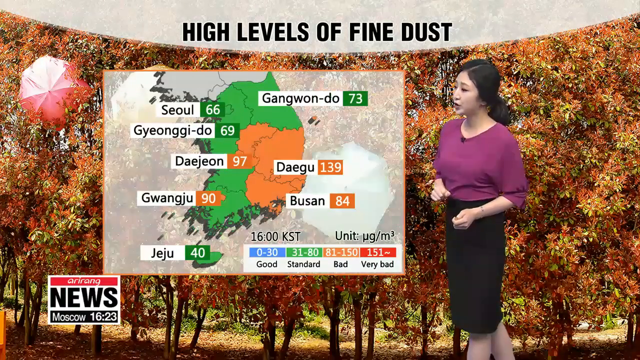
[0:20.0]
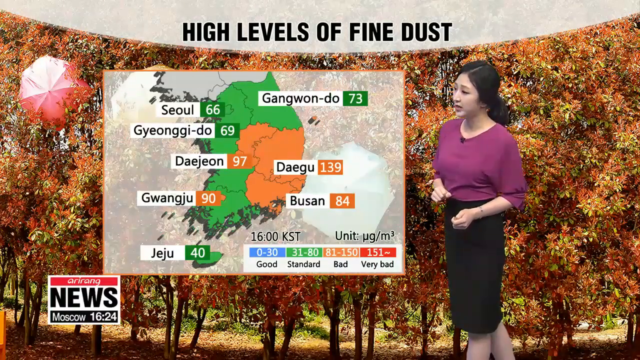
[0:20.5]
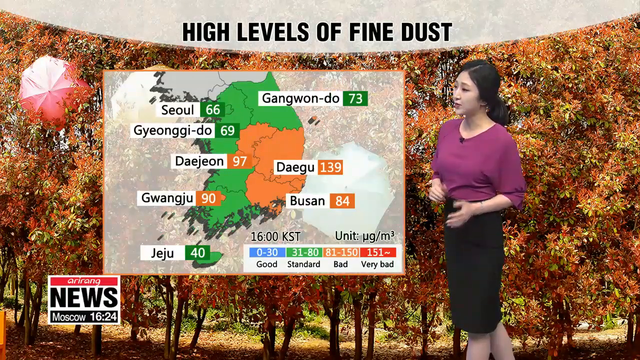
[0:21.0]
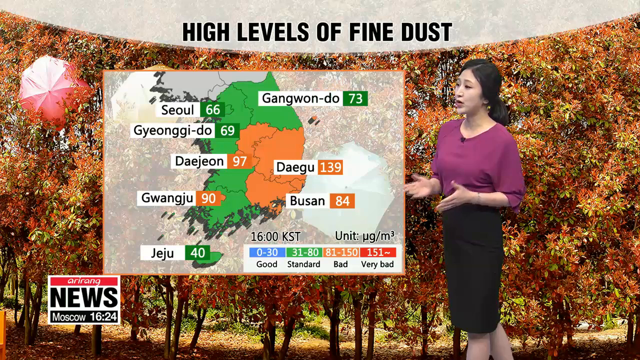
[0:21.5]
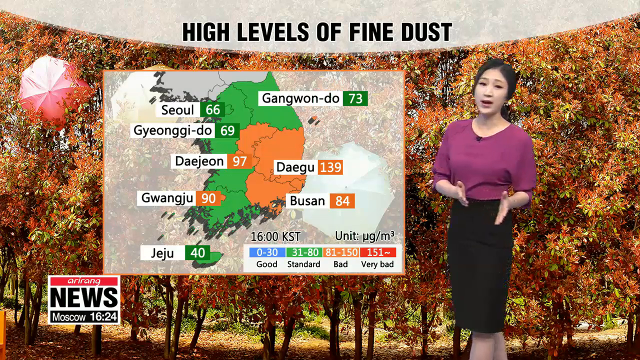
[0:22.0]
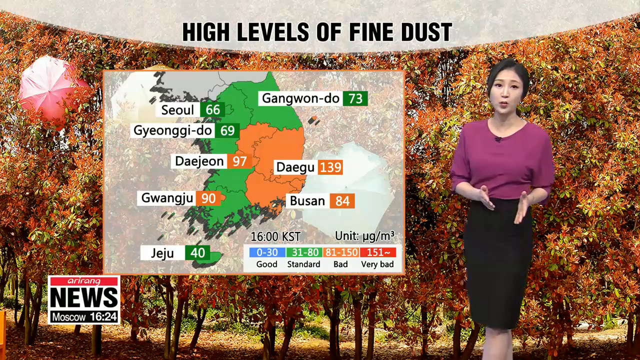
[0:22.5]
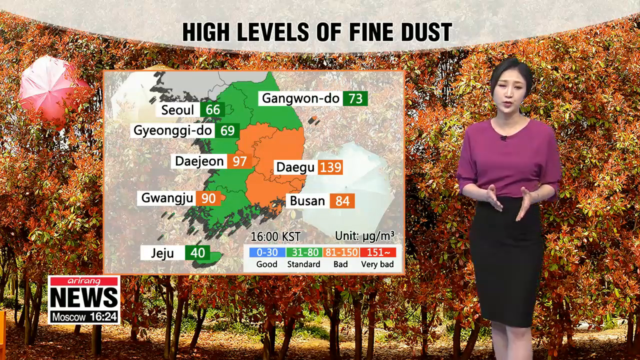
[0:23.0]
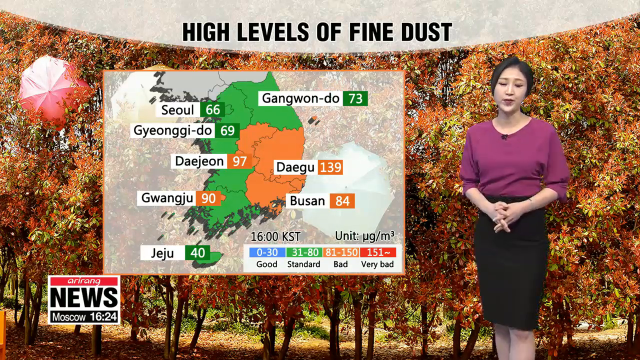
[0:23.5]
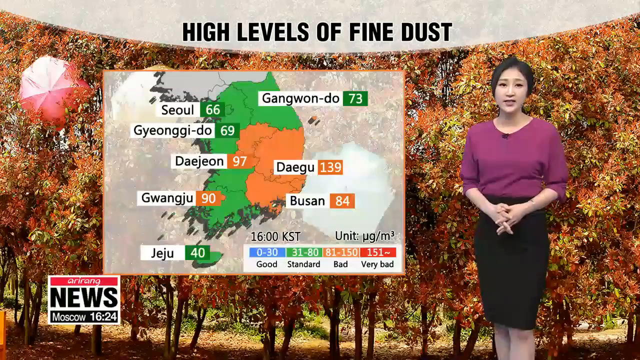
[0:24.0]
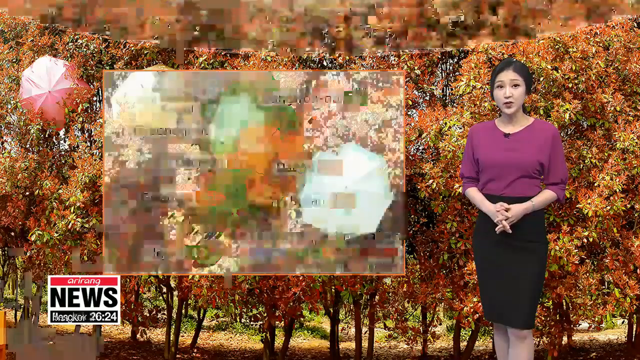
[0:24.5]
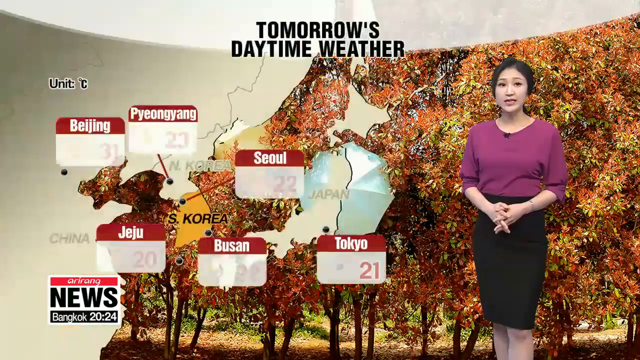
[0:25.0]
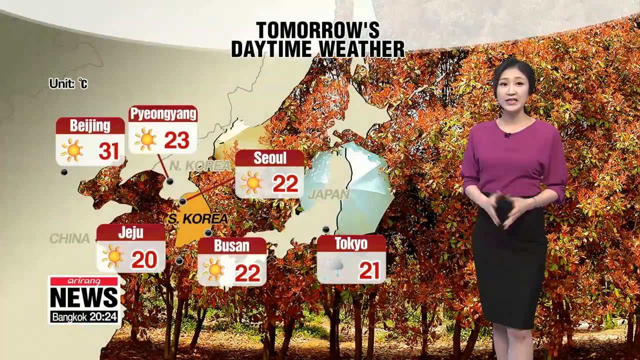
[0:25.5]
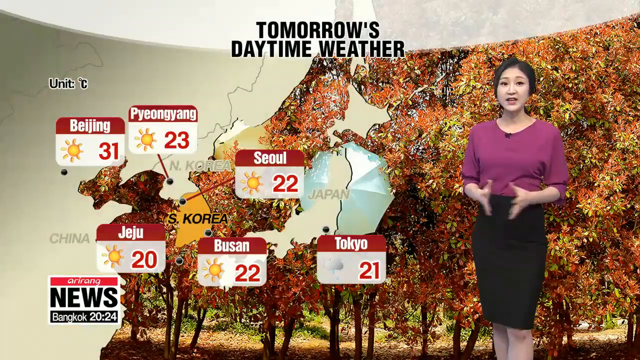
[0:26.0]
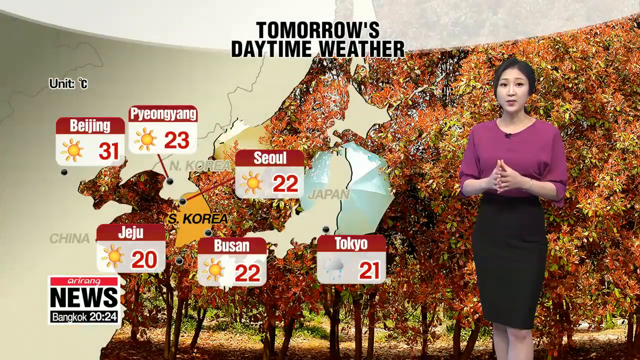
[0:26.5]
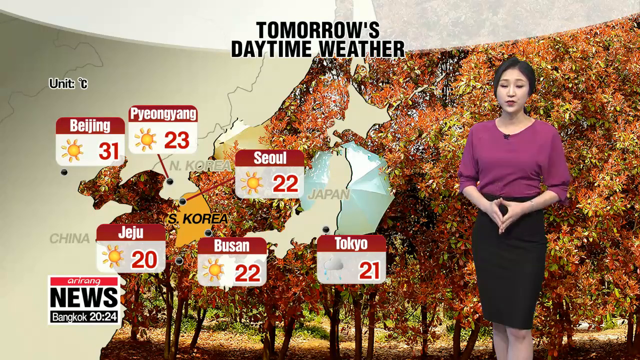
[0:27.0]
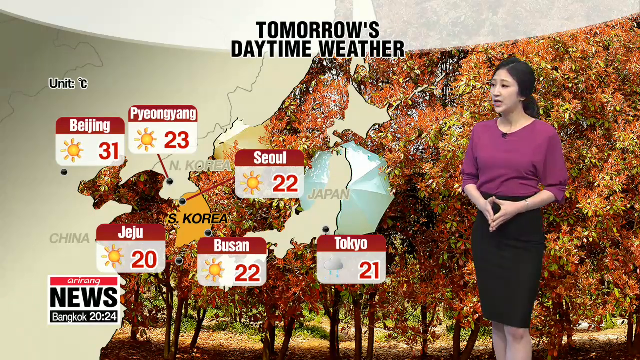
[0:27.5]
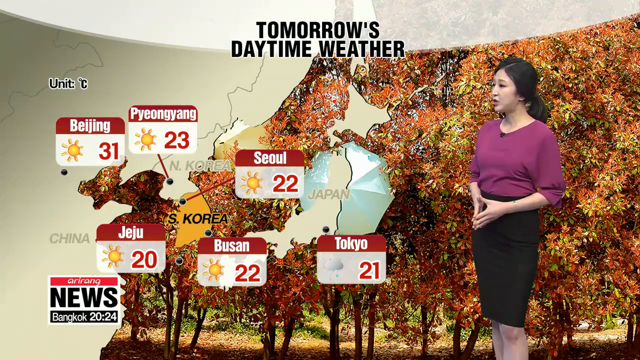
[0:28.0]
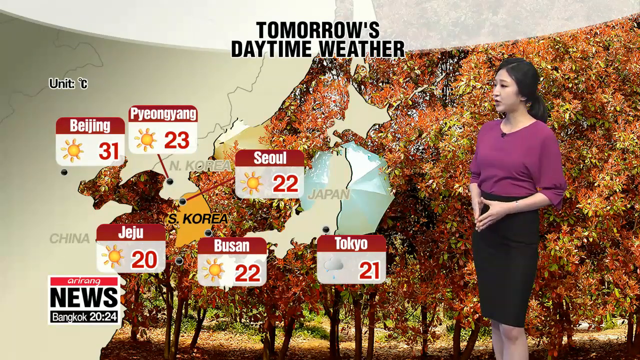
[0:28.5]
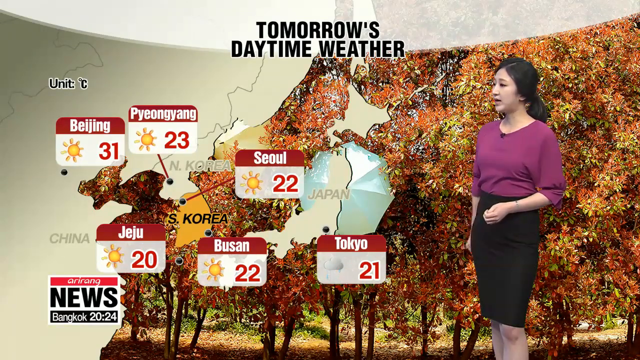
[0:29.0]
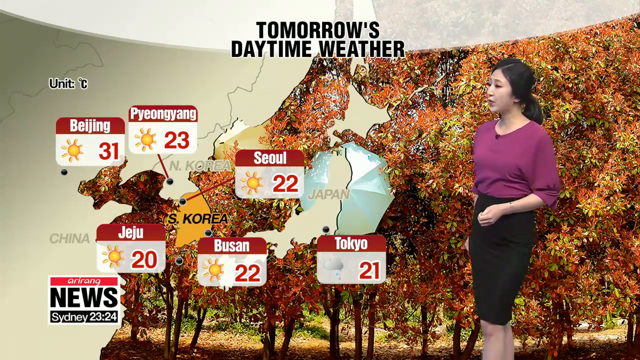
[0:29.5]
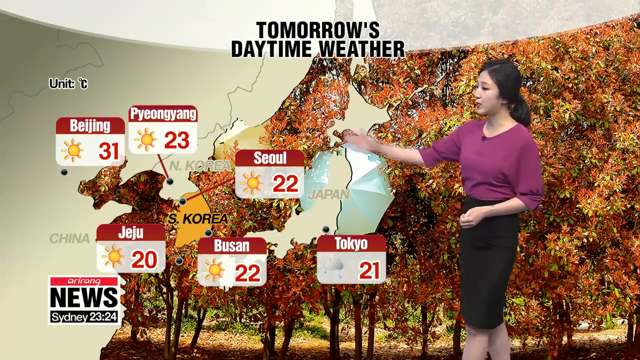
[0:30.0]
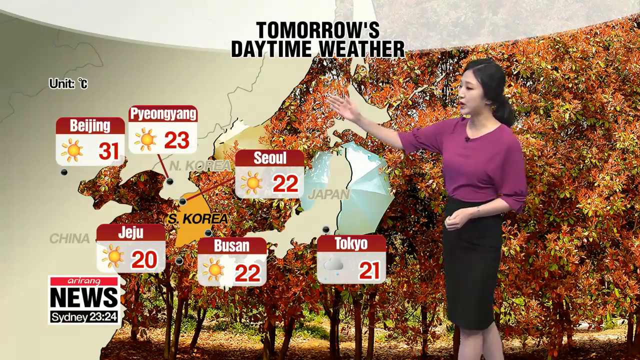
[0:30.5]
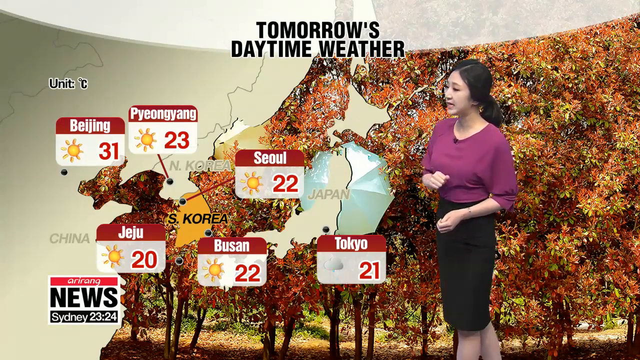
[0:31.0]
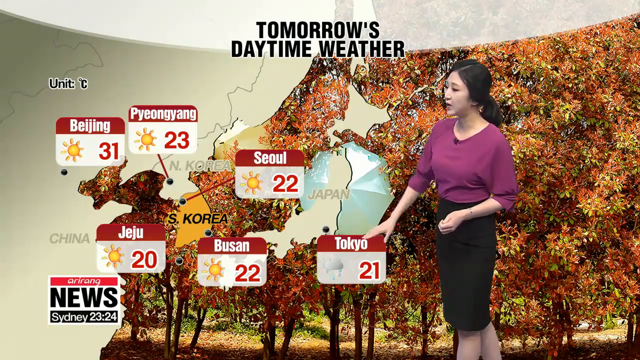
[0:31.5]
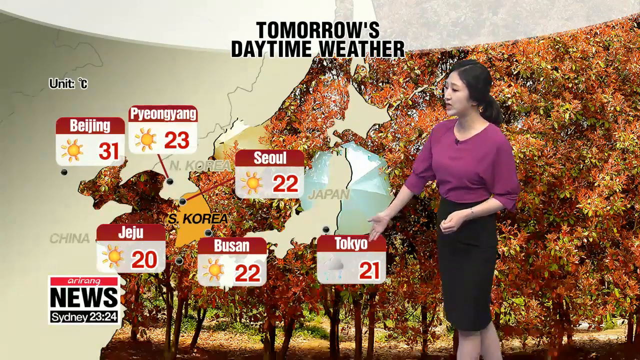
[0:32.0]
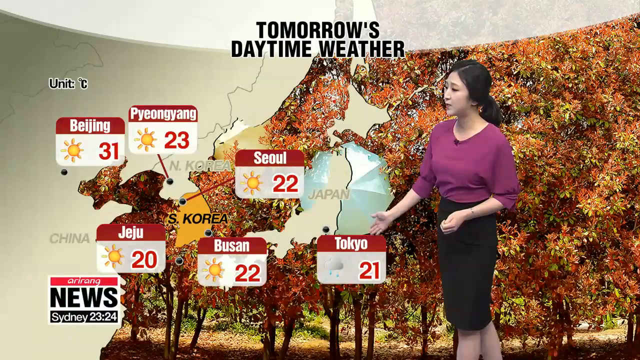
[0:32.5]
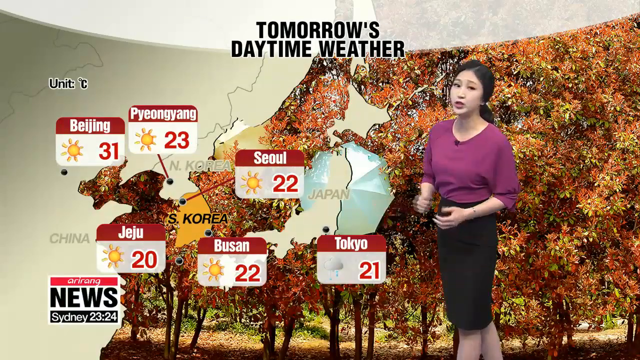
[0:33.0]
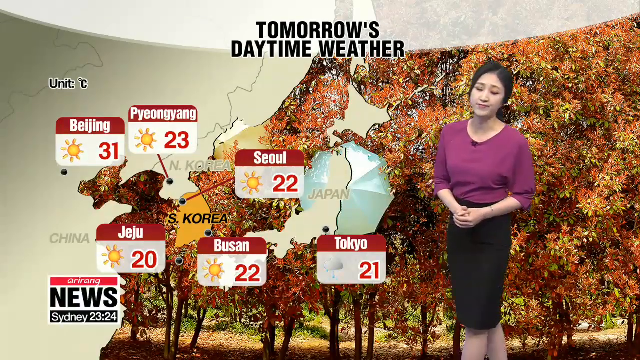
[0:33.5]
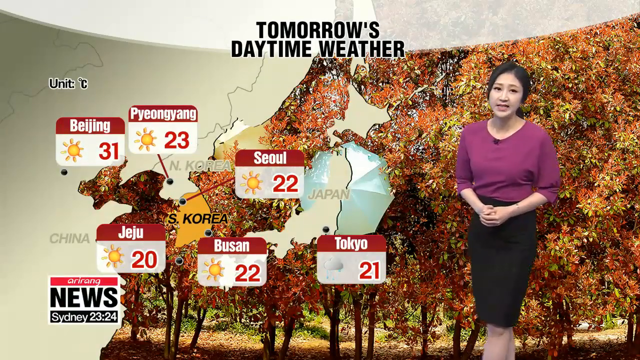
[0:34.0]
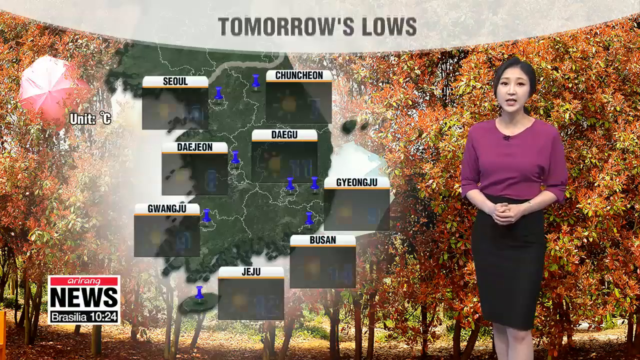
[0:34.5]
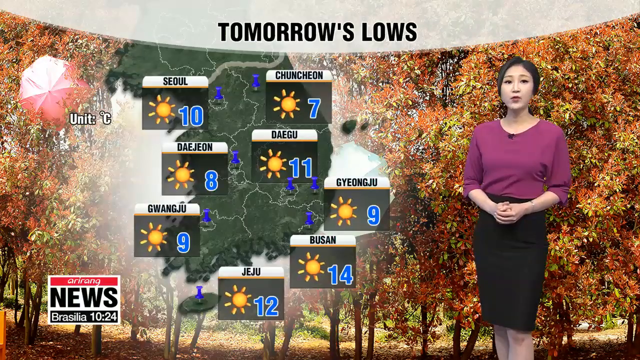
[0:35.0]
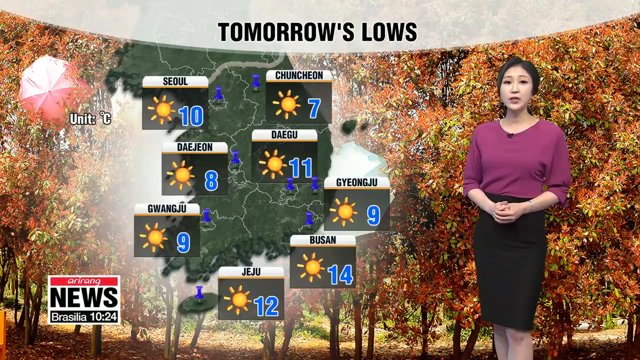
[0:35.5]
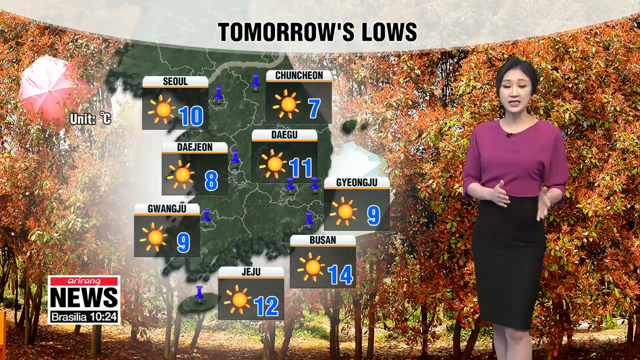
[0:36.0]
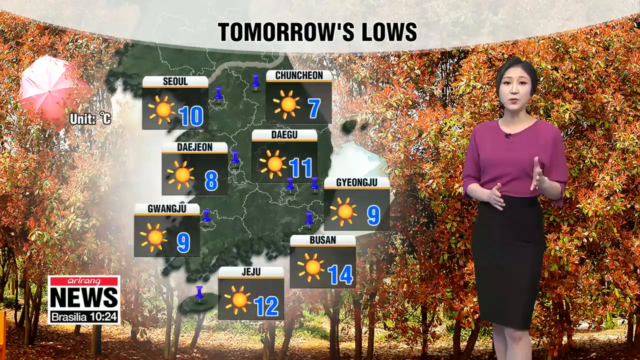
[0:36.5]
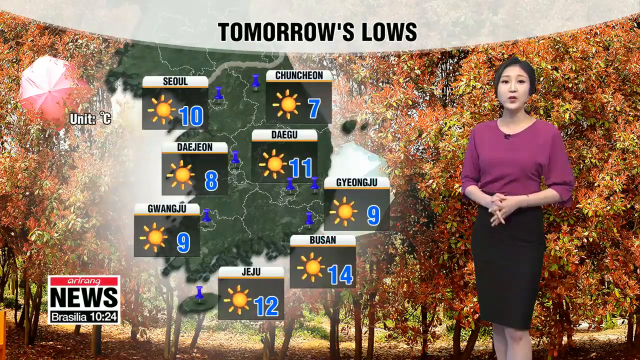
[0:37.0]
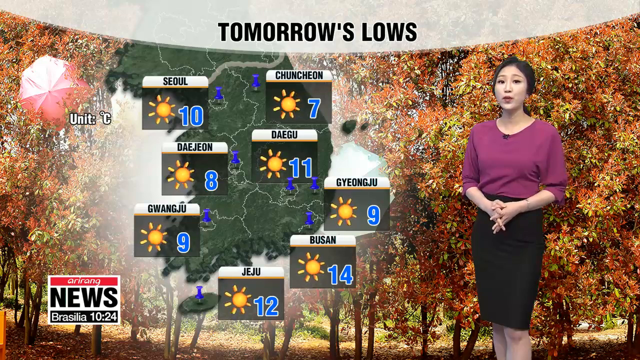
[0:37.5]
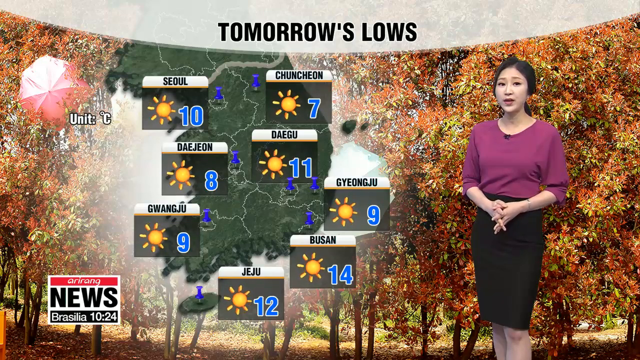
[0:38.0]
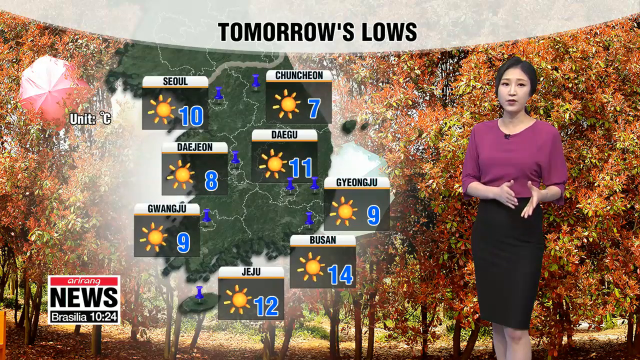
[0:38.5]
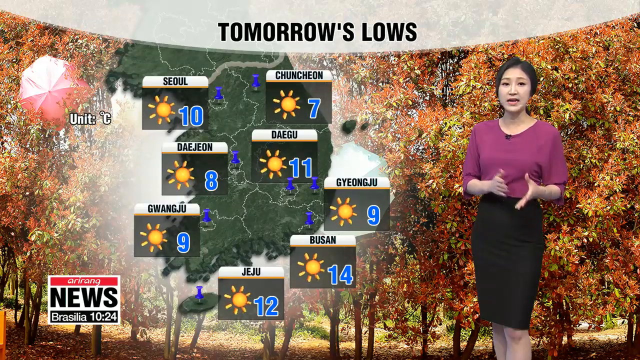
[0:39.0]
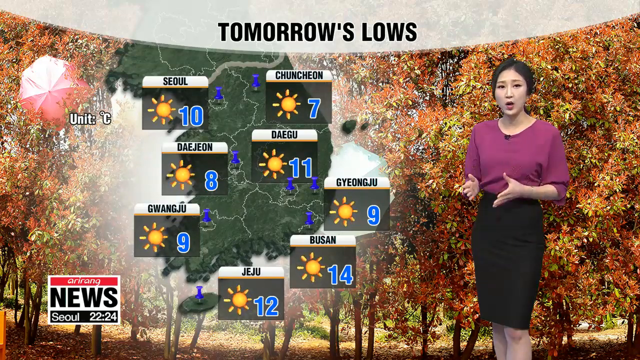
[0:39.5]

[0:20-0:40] A faint orange border surrounds the map, and the white space outside it is translucent white, so the autumn leaves show through behind it; an umbrella behind it looks whitish instead of green. Above the legend a unit of measurement reads "unit" with UG/M cubed, along with "1600 KST". The graphic then moves to tomorrow's weather, again with the white arc at the top and a heading in all caps. Pinpoints with red arrows are hard to see because the leaves are in the way, which looks like an error; the different areas are shown in beige, blending in with the leaves. Beijing is shown in a red box with white writing, its temperature in red and a sunny icon to the left; Tokyo is shown as cloudy with rain. The woman looks and points to Tokyo with her right hand. Tomorrow's lows are then shown, and this time the land formation is easier to see. A white banner has a sun emoji, and the lows appear in blue at the various spots where they are located in the region.